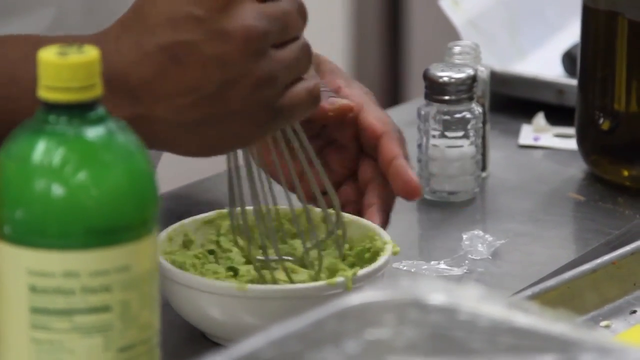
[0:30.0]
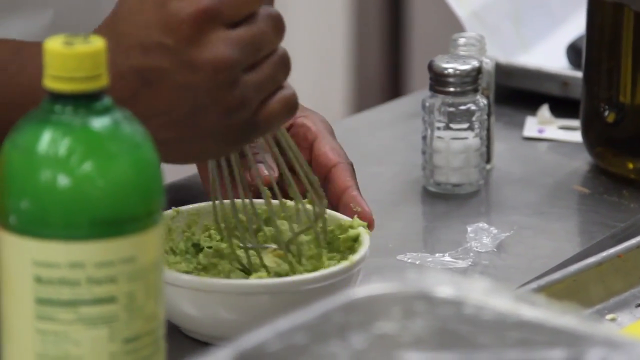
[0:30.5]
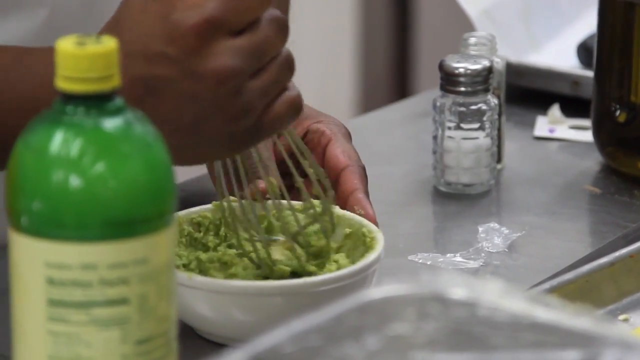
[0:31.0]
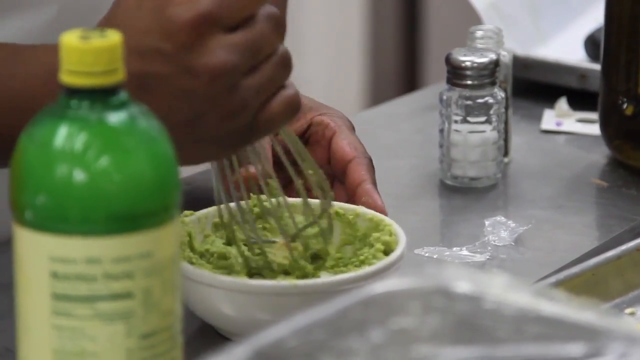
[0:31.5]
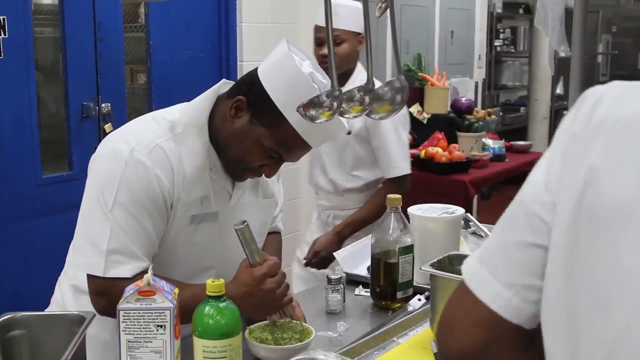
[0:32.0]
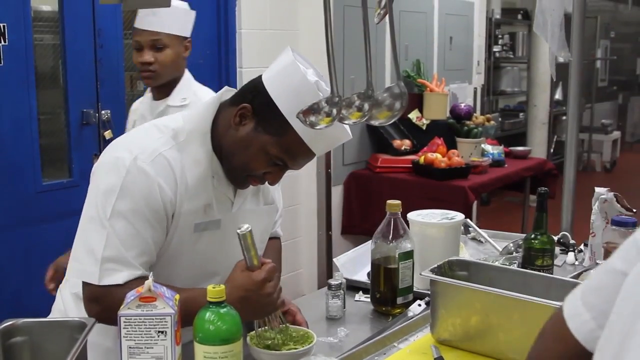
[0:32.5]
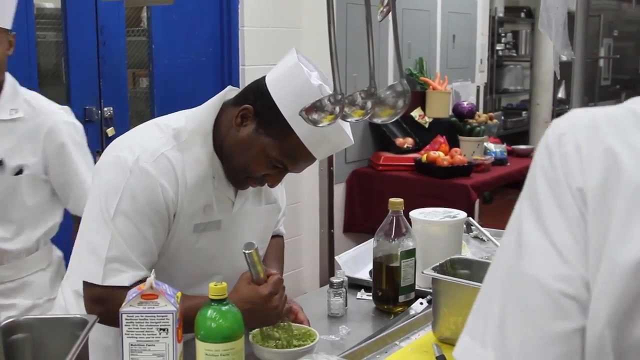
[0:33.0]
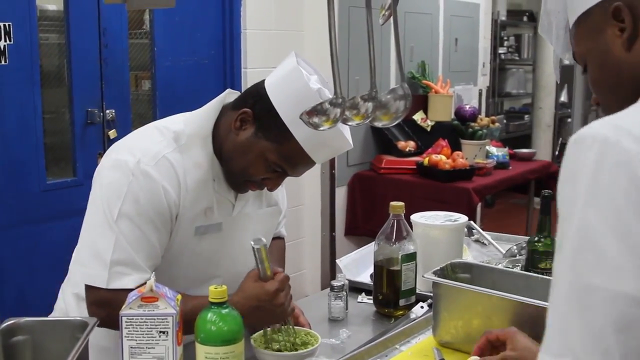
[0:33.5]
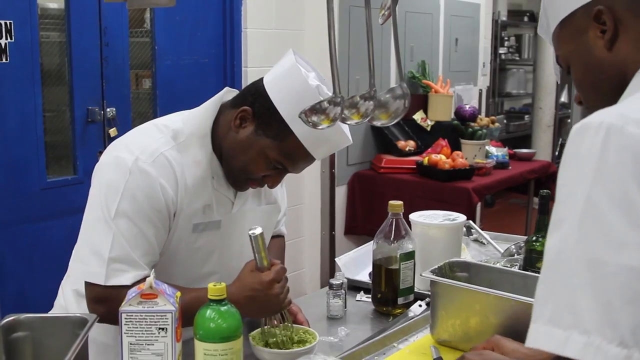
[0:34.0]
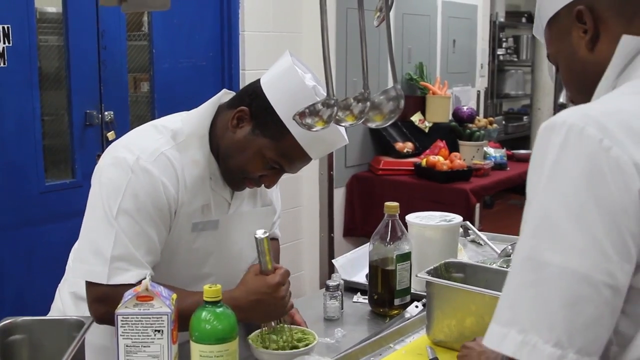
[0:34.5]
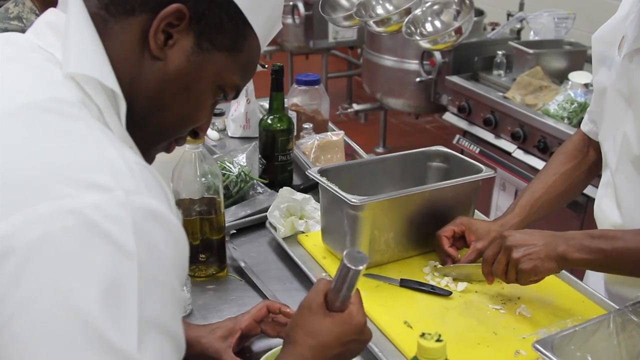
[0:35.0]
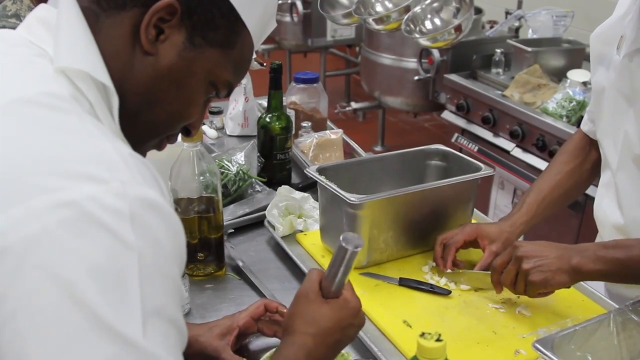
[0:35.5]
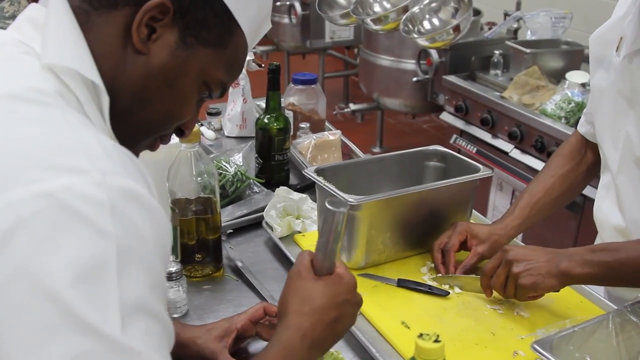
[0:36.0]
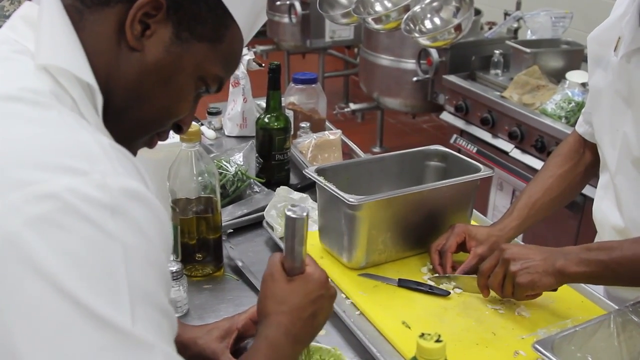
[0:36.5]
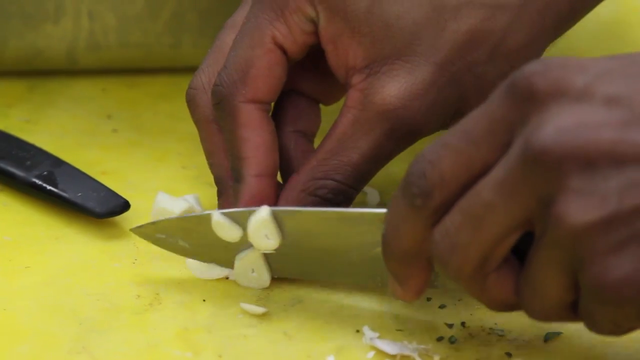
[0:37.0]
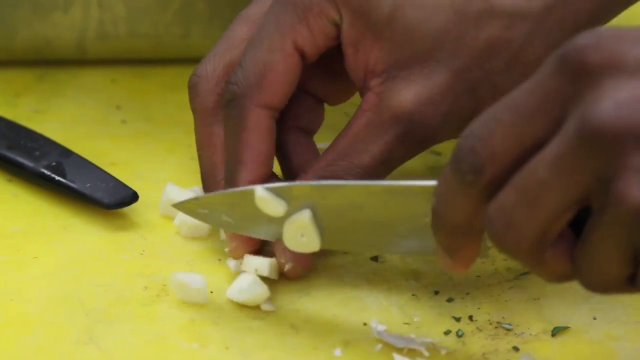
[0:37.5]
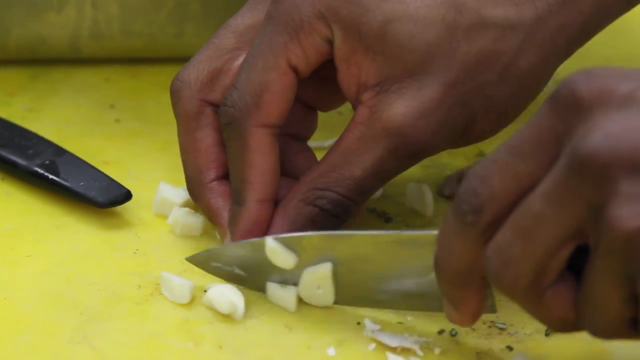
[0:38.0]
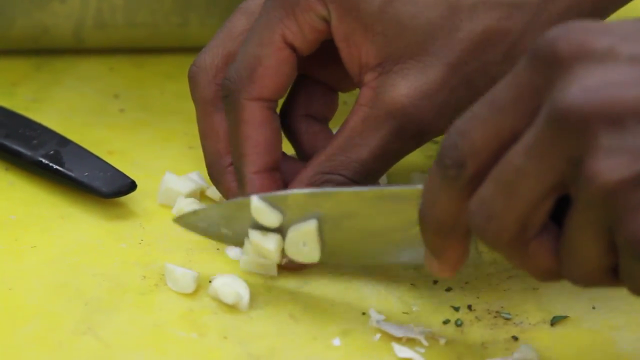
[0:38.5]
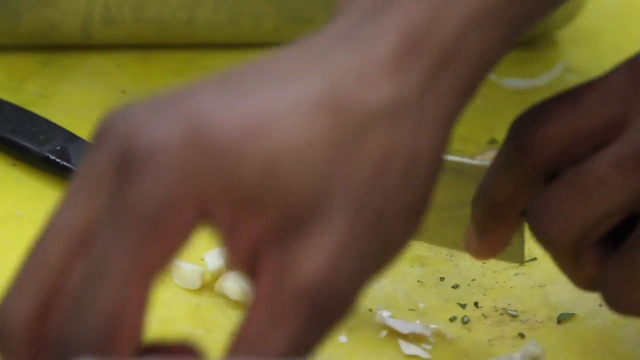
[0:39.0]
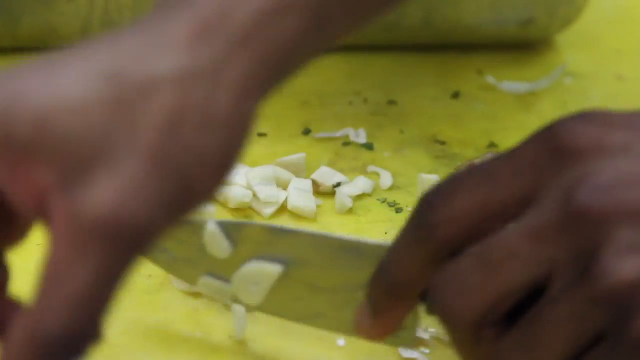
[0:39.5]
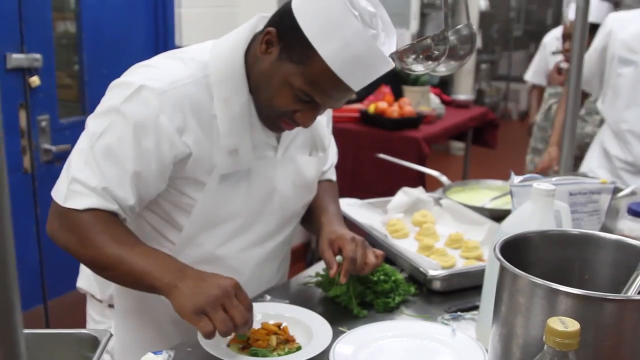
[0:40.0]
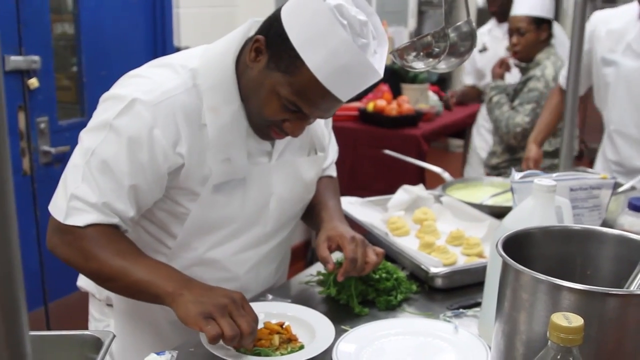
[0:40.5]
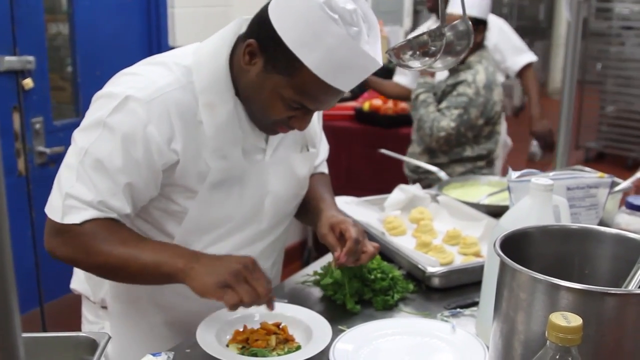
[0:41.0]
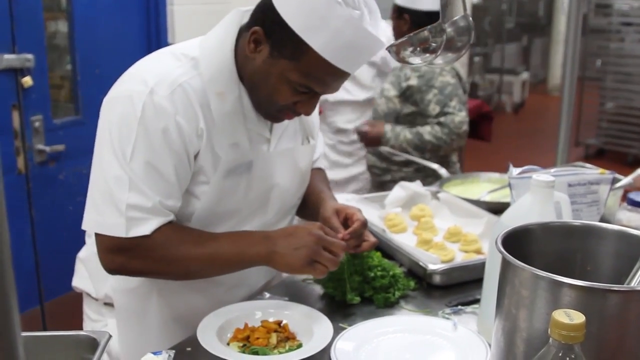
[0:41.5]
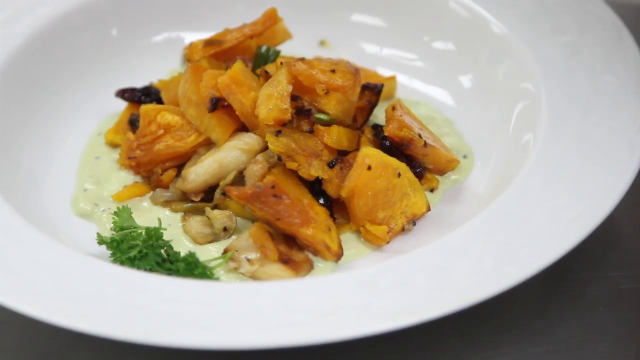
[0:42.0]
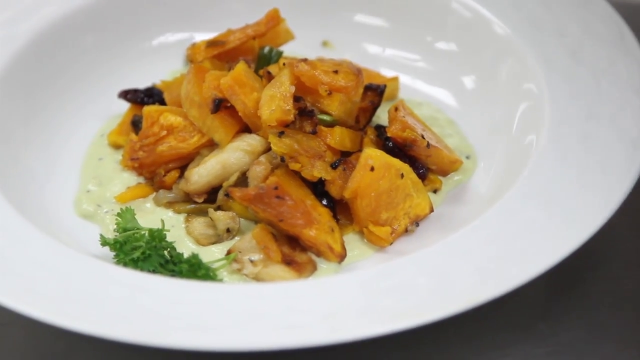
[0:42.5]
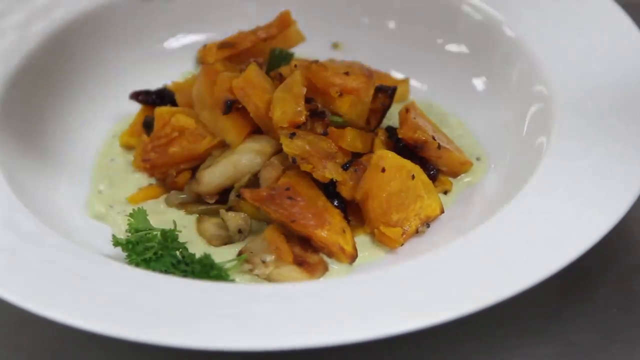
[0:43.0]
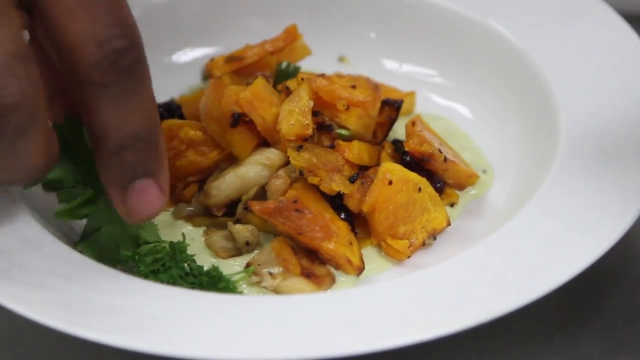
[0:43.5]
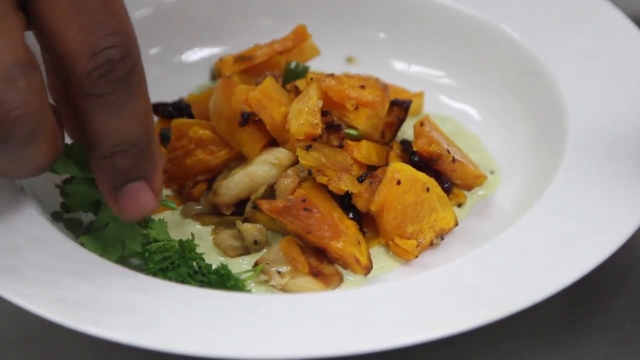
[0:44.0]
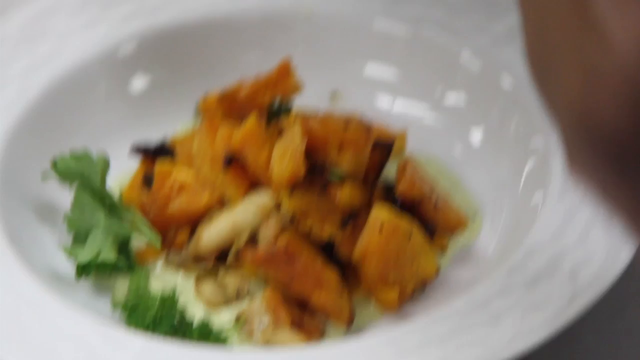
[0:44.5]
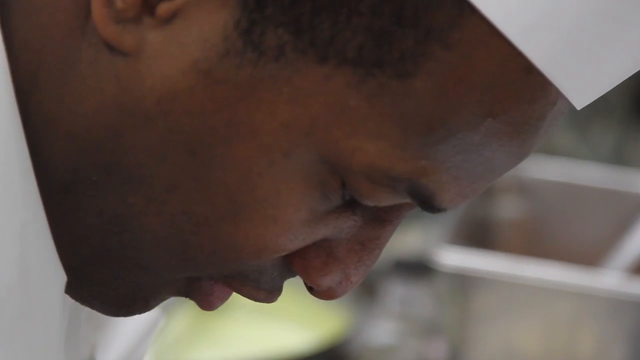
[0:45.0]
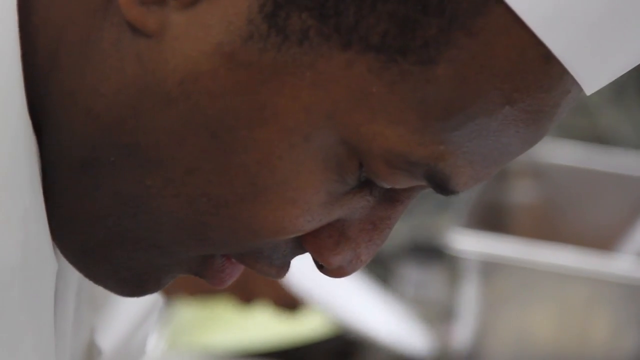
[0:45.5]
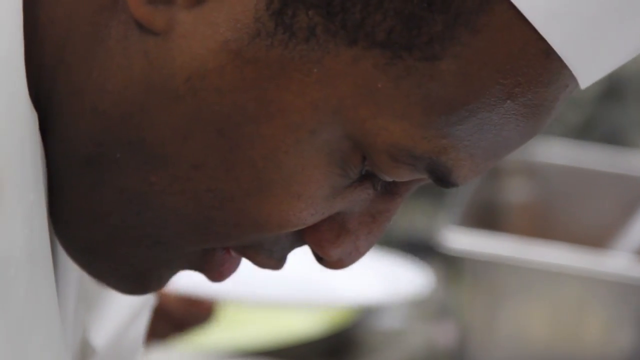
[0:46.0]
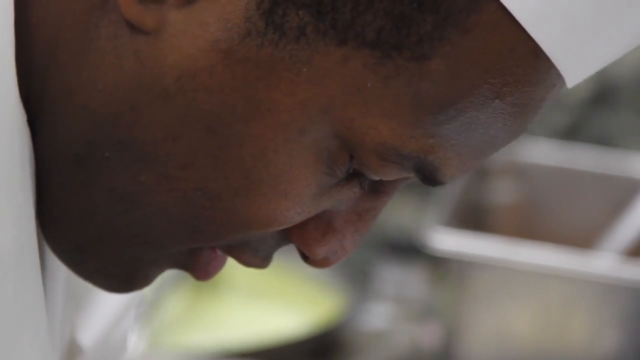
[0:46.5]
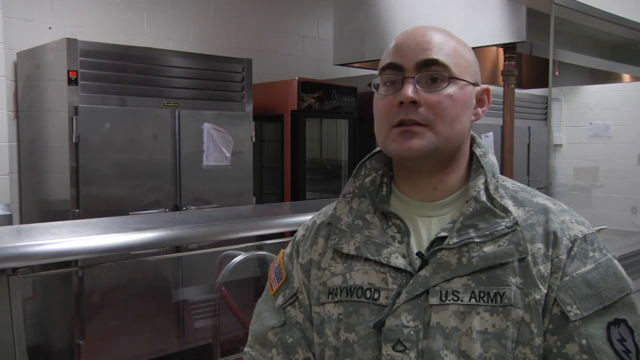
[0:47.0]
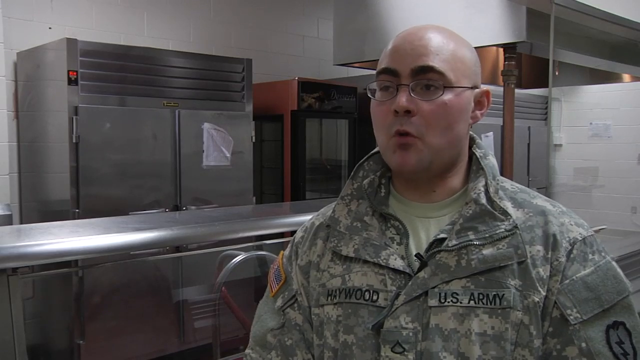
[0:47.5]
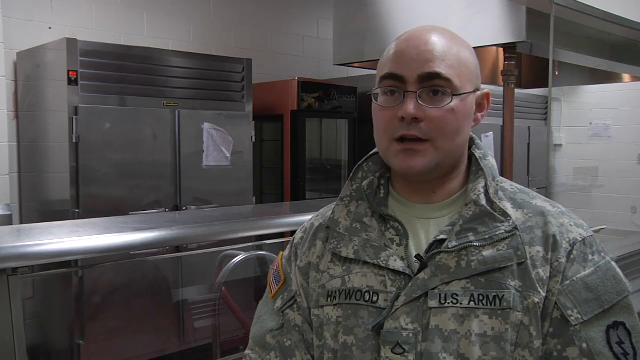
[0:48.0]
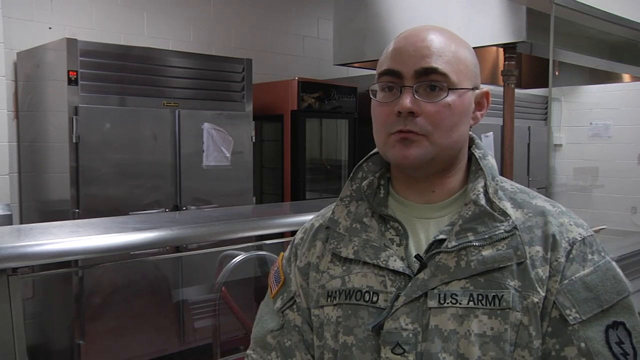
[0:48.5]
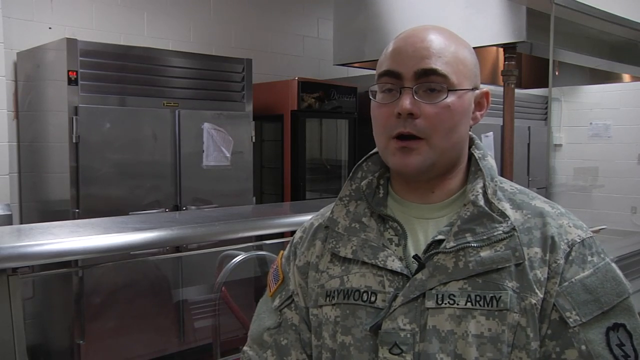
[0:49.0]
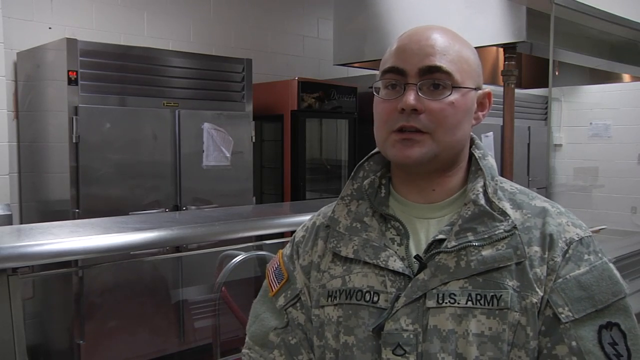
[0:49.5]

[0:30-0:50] Salt and pepper are on the counter. The camera pans out to show the look of concentration on the chef's face; he wears white chef overalls and a hat. A bottle of olive oil is also on the counter. Opposite him, someone uses a knife in his left hand to chop garlic, shown in a close-up view. Next comes a plate of food that looks like the fried squash, and somebody adds bits of coriander to the side of the dish. The scene returns to the bald-headed man in army uniform. The setting appears to be some kind of army kitchen.